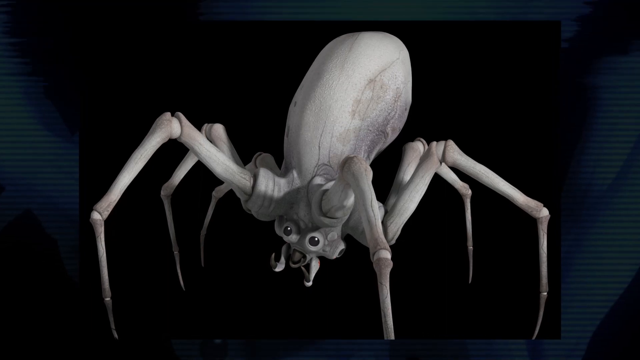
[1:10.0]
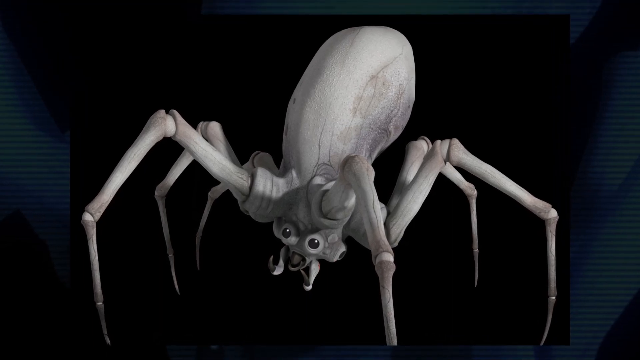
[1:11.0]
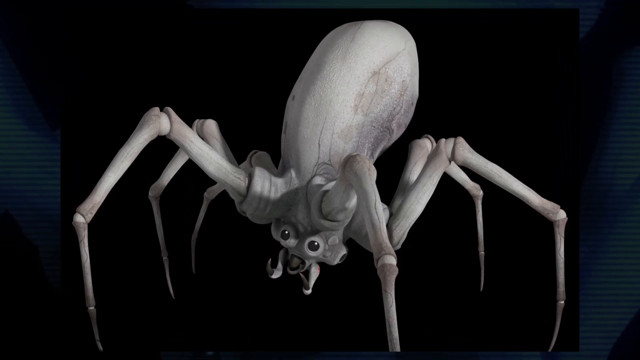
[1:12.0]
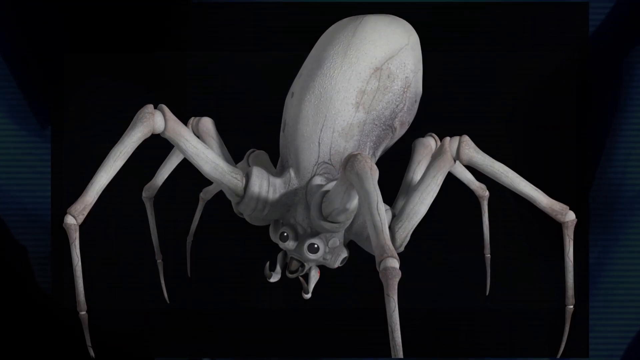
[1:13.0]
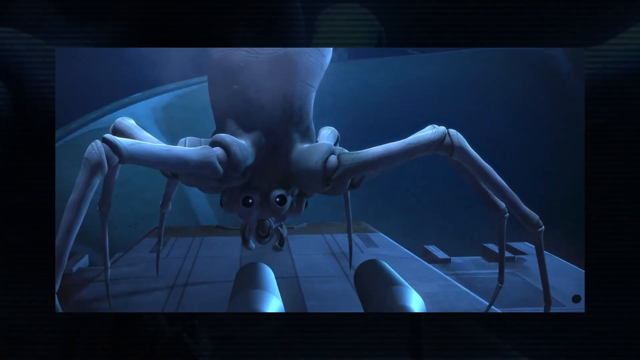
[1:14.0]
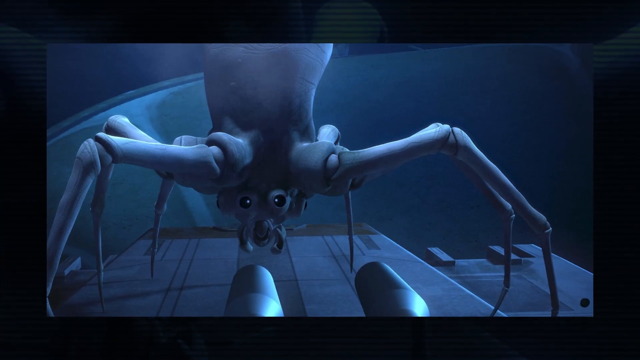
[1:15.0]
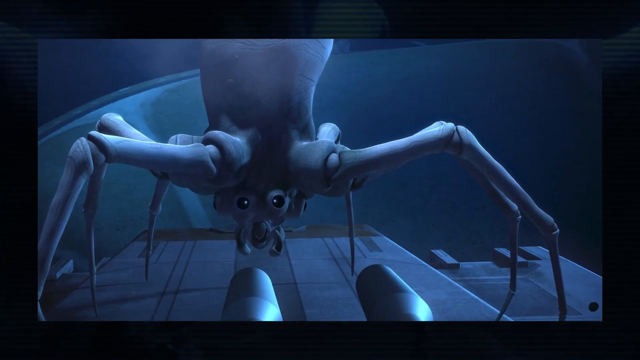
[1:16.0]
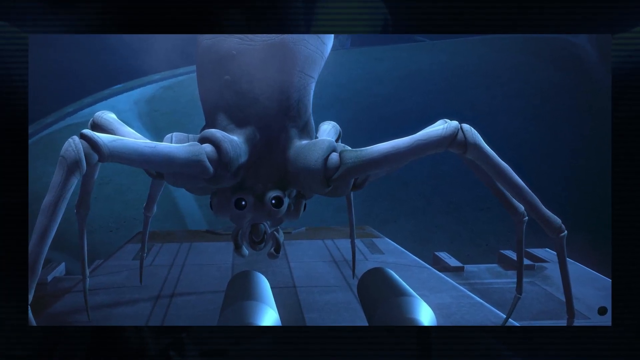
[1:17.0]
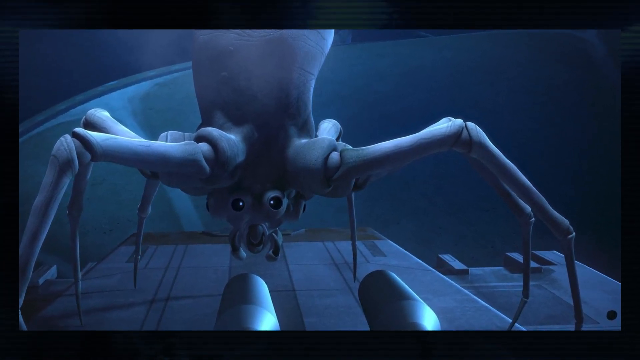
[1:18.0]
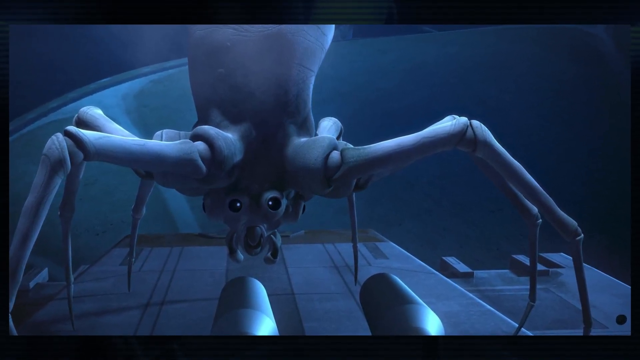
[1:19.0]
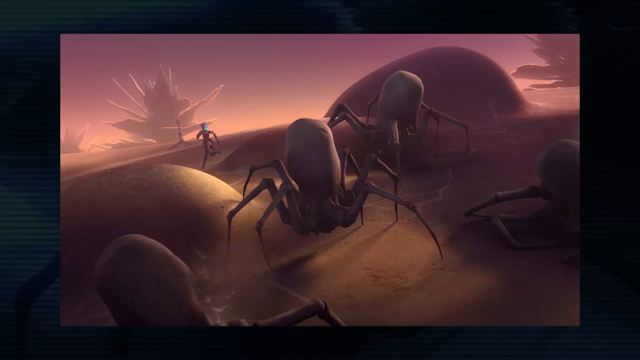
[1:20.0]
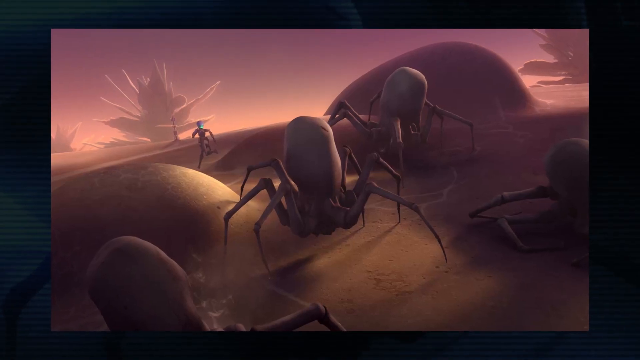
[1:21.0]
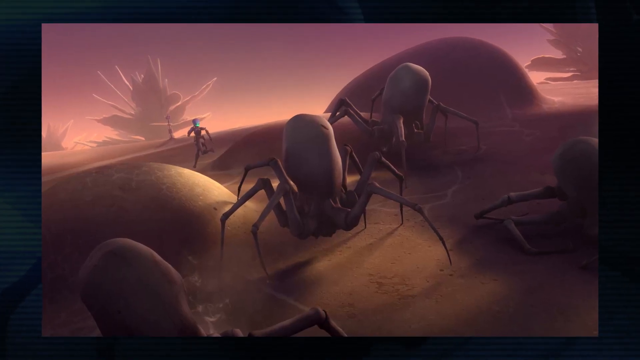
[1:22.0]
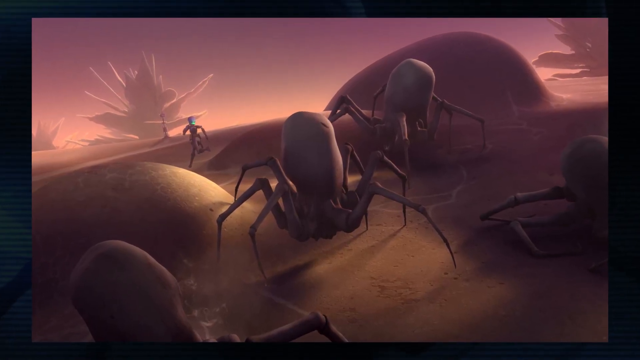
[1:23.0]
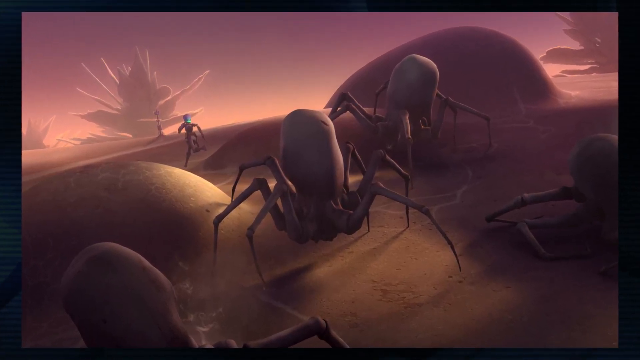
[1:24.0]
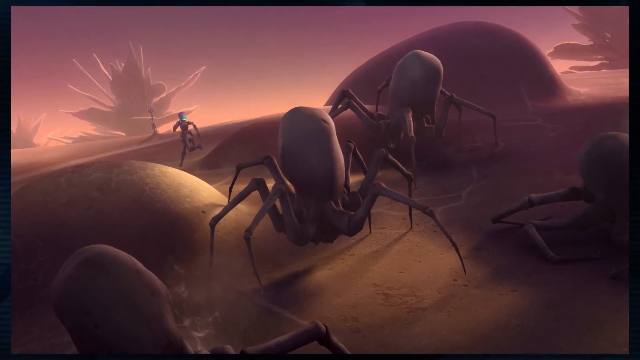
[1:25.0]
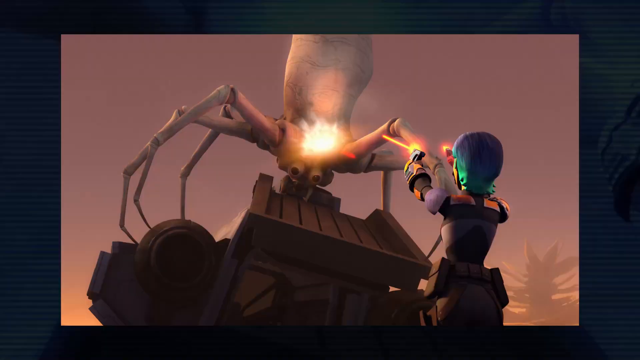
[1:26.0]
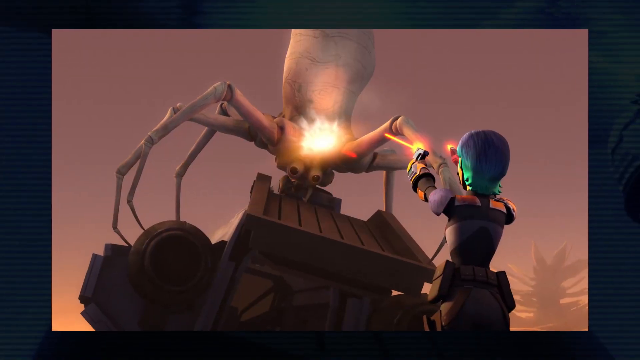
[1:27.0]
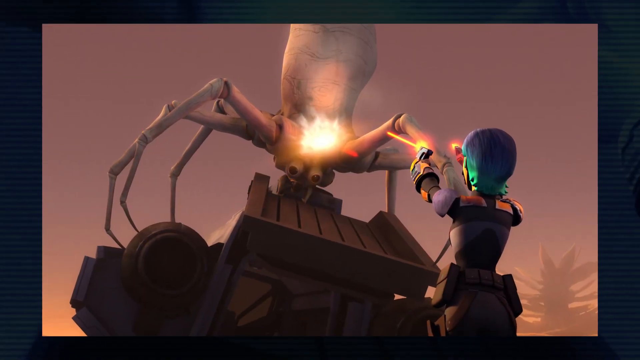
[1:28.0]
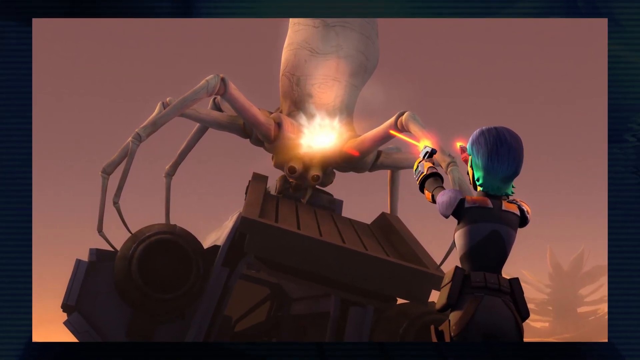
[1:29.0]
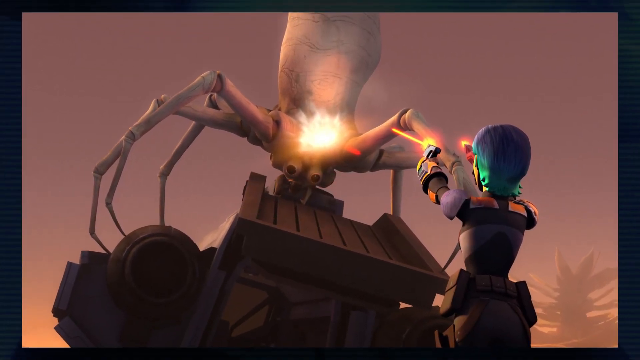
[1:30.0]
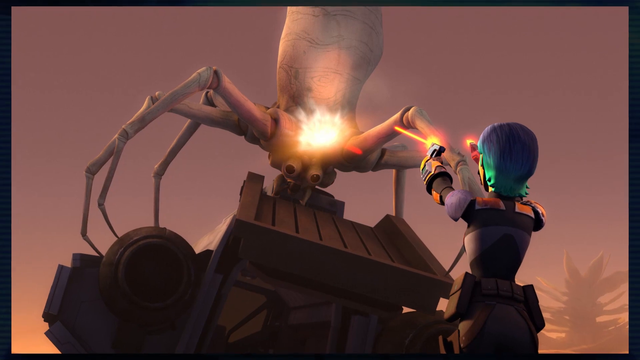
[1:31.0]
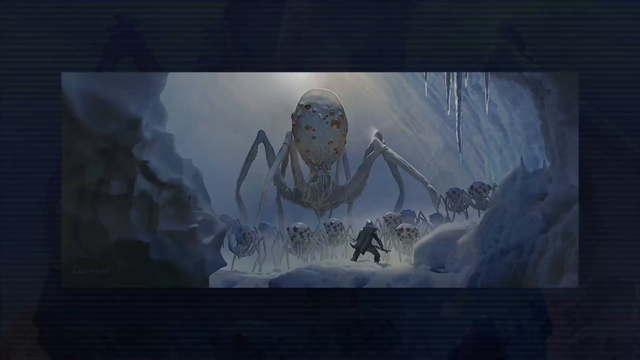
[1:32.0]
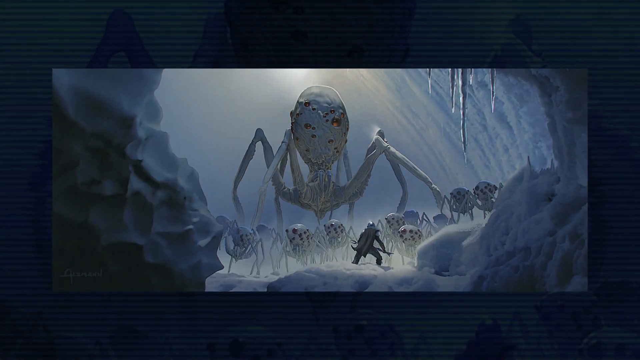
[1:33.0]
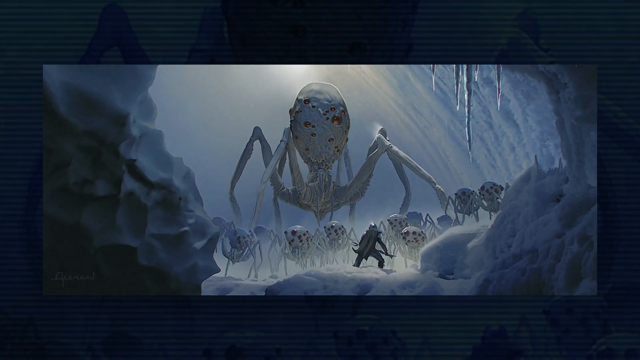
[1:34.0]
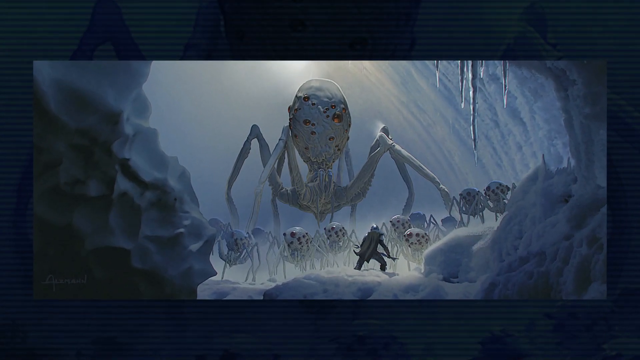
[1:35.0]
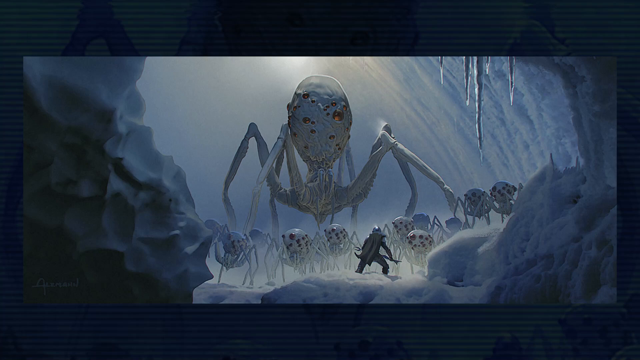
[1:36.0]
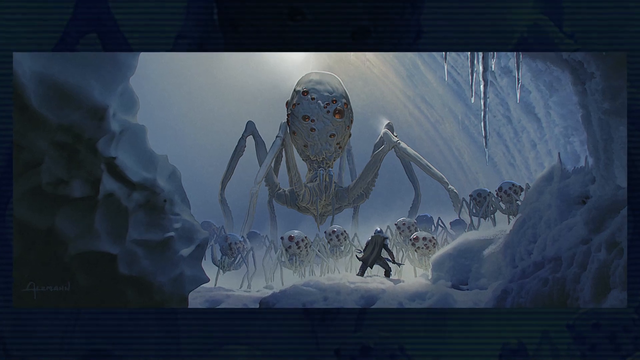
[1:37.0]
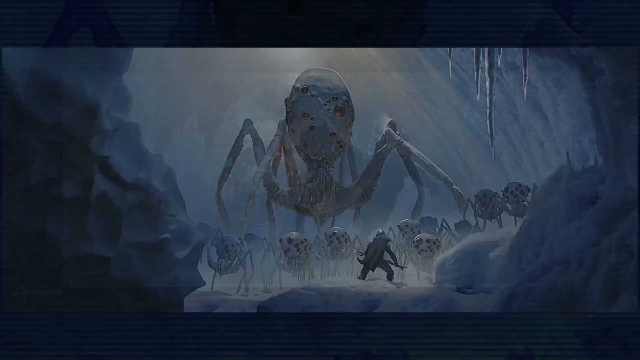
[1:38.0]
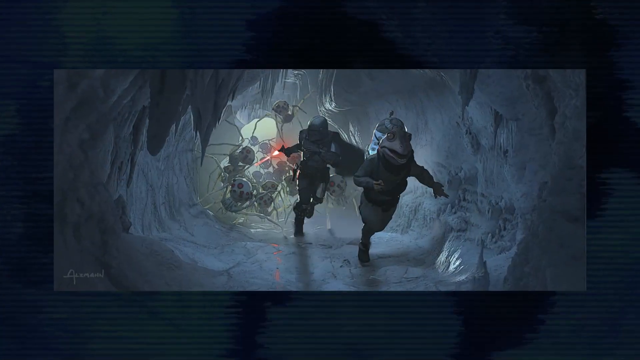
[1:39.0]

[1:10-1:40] A close-up shows a model of a white spider-like creature that looks like a monster from a movie. It has tall, skinny legs and an elongated white body, and its face is below its legs, with two large eyes that look like goggle eyes. Next is what looks like an illustration of the same creature, which looks like it might have been generated by a computer. Another similar illustration shows several of these creatures on a terrain that looks like sand dunes, with a human figure running away from them in the background. Several more images show a human fighting one of these creatures, holding what look like lasers or ray guns in both hands and firing light toward one of the large white creatures. Another scene shows an army of these creatures, a huge one in the center and many smaller ones below it, approaching a character in a suit of armor. Then an image shows characters running away from these creatures through a cave.